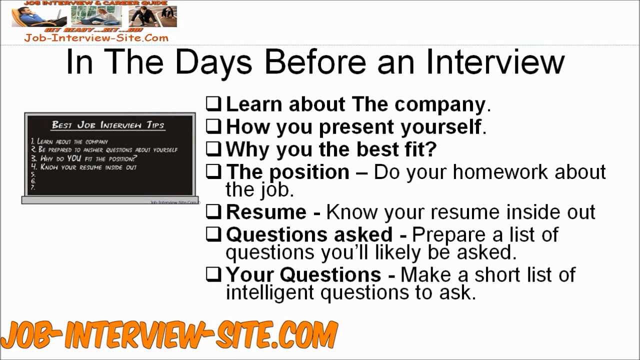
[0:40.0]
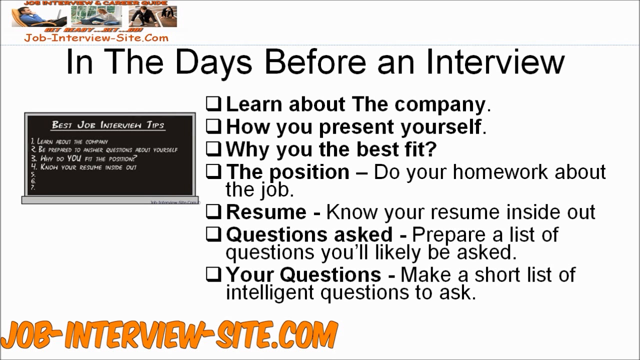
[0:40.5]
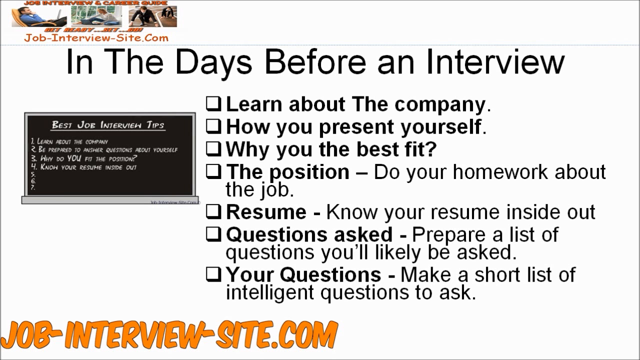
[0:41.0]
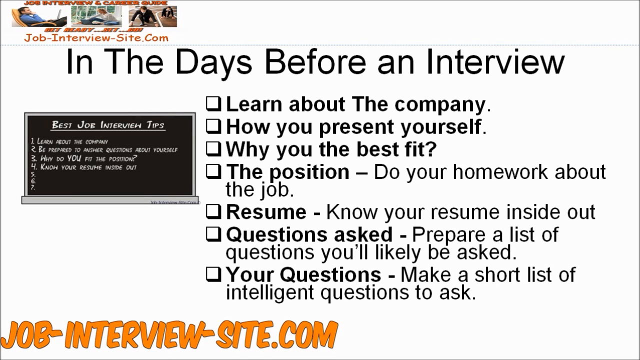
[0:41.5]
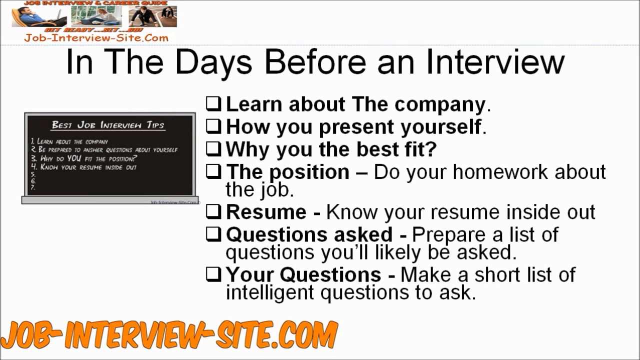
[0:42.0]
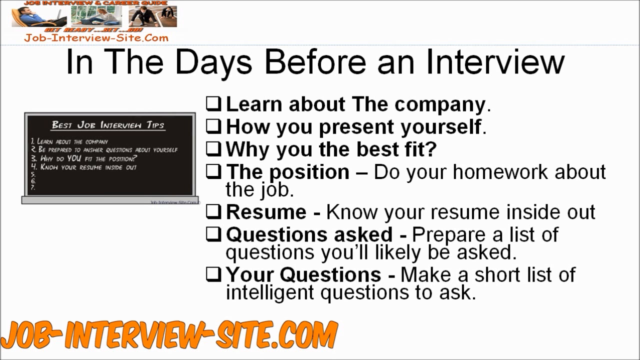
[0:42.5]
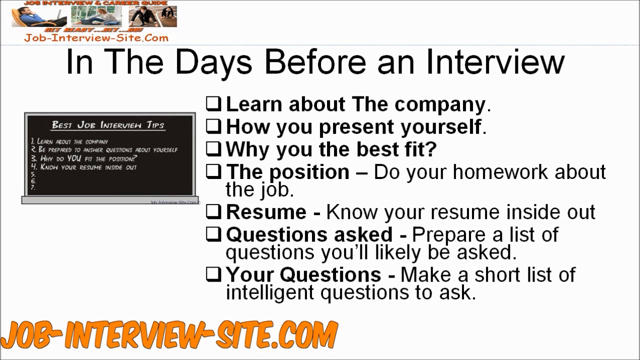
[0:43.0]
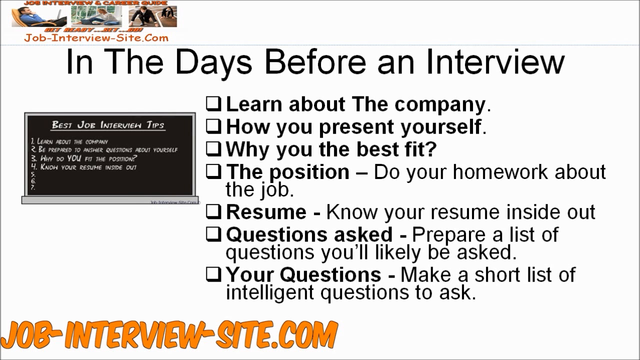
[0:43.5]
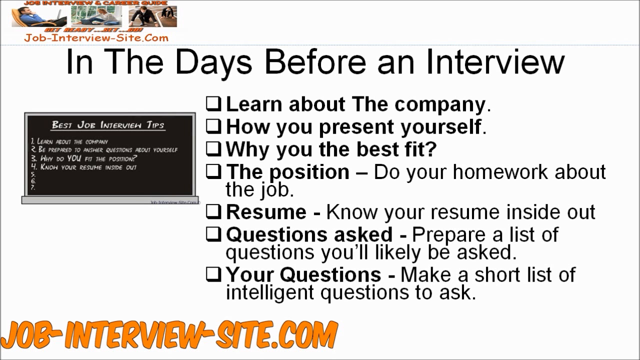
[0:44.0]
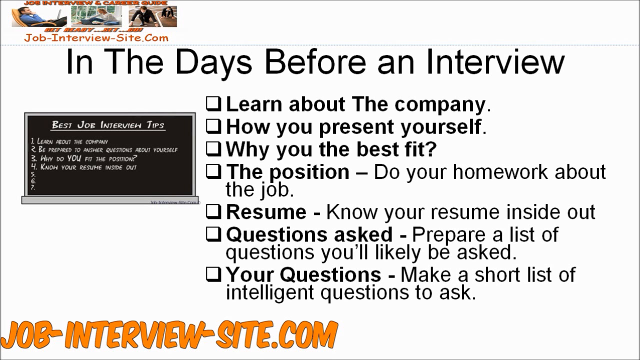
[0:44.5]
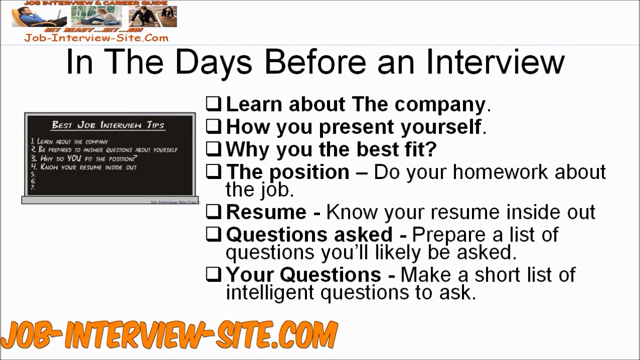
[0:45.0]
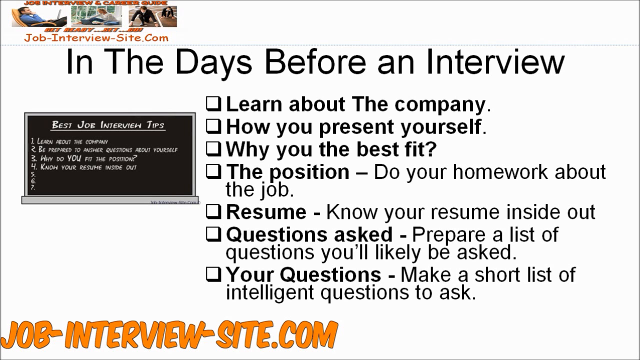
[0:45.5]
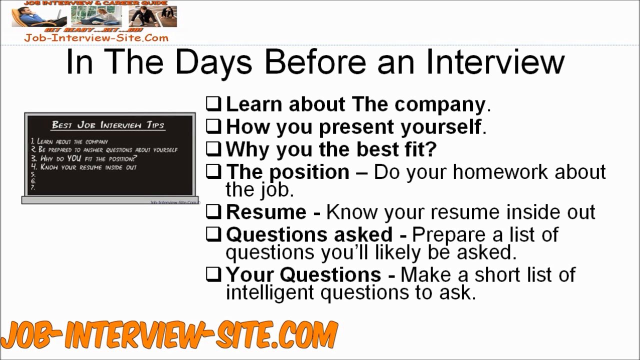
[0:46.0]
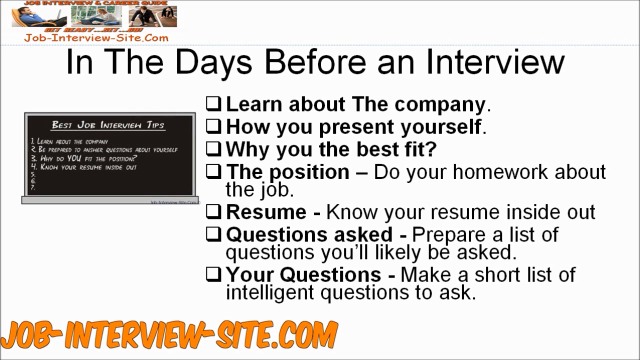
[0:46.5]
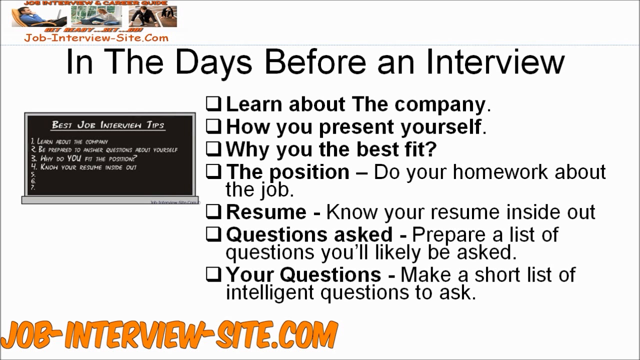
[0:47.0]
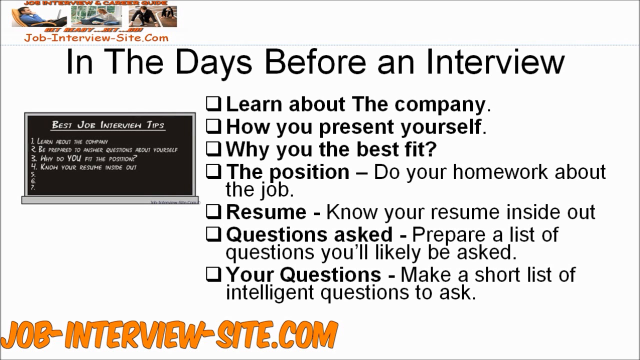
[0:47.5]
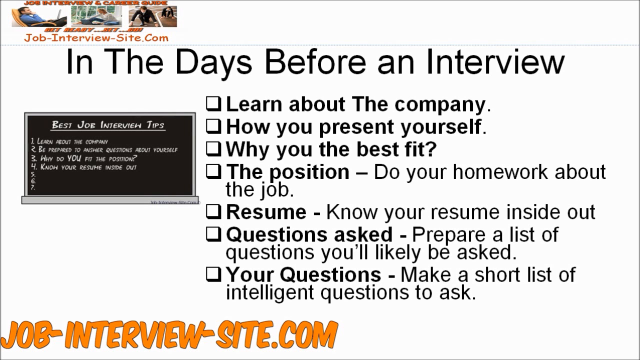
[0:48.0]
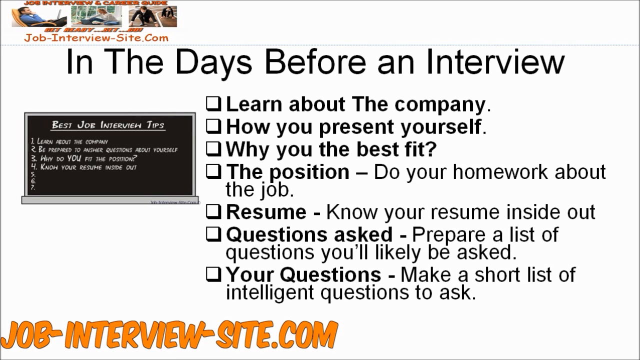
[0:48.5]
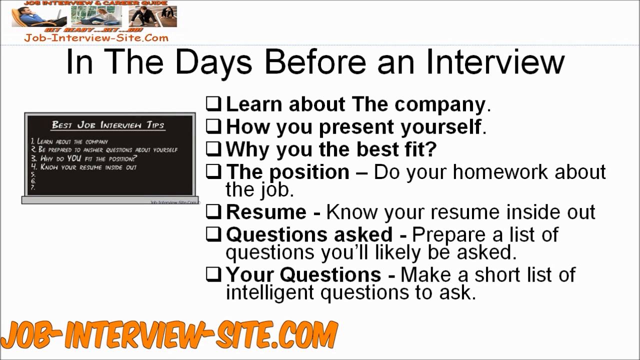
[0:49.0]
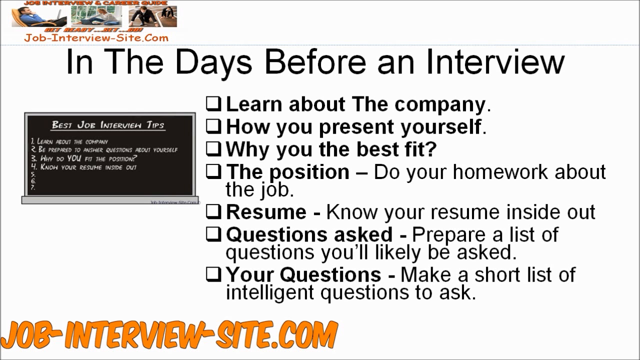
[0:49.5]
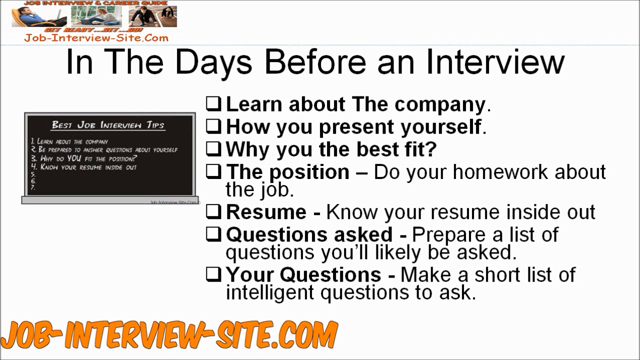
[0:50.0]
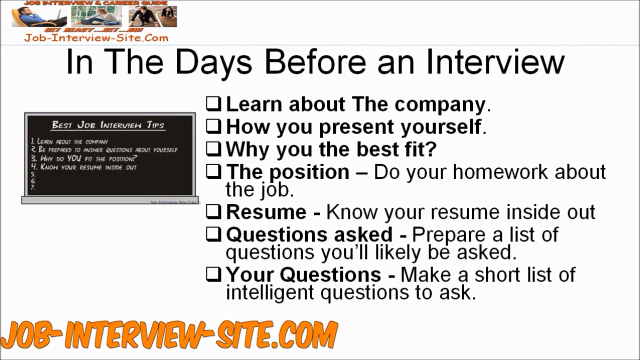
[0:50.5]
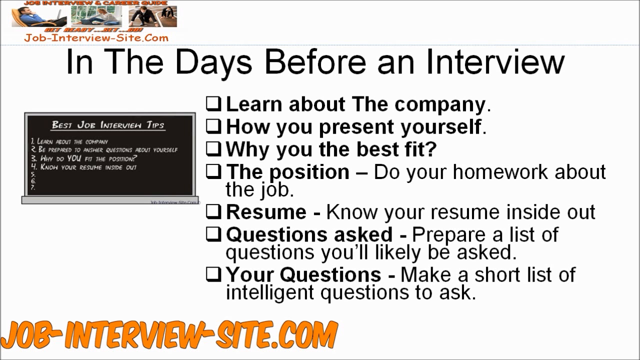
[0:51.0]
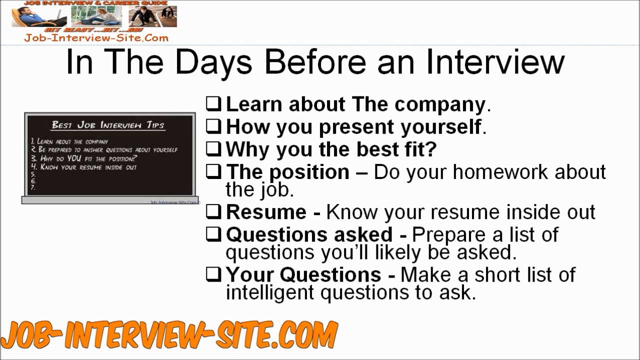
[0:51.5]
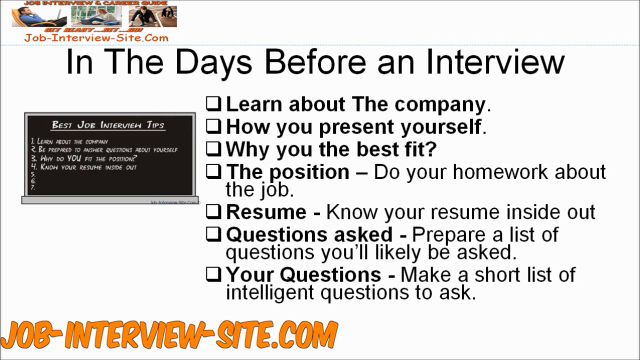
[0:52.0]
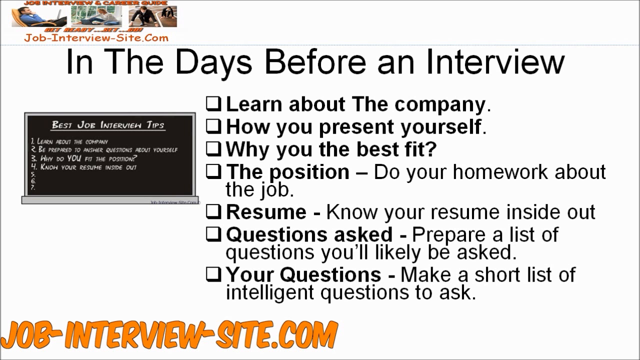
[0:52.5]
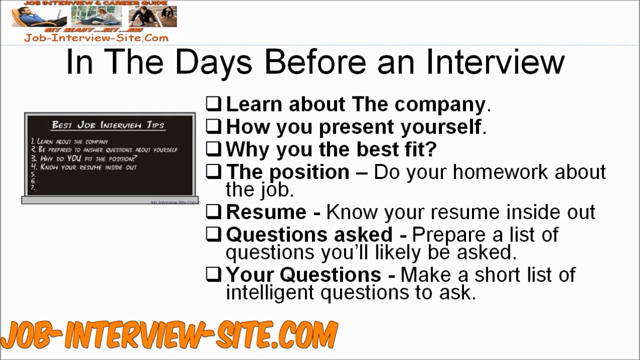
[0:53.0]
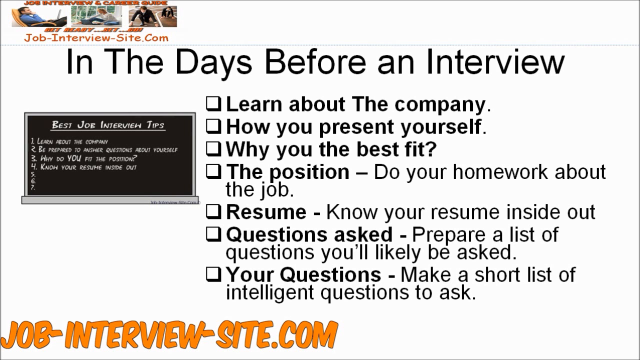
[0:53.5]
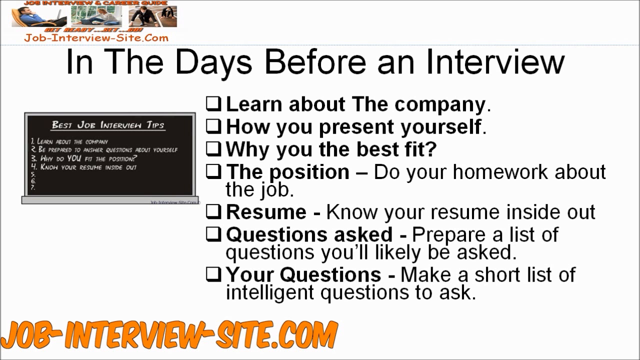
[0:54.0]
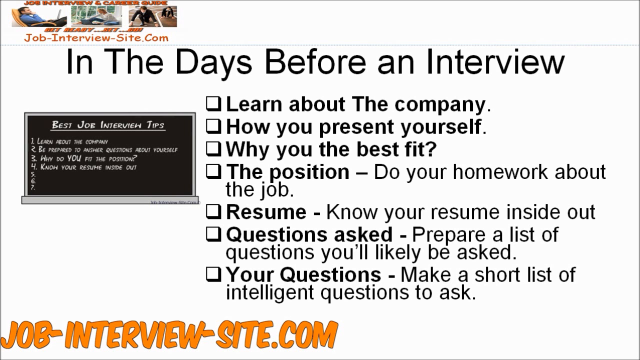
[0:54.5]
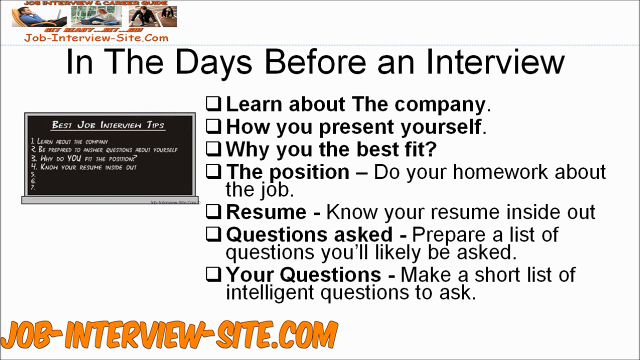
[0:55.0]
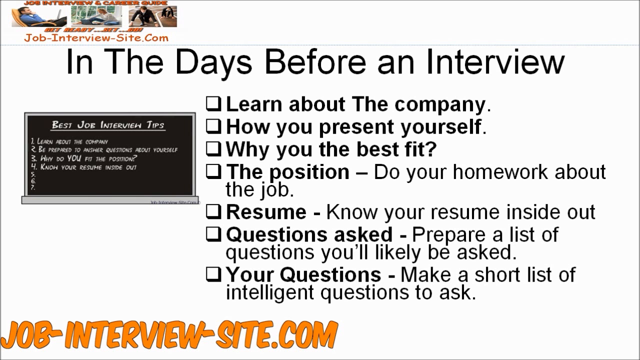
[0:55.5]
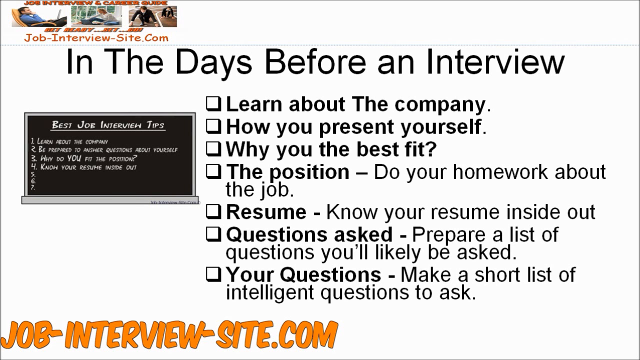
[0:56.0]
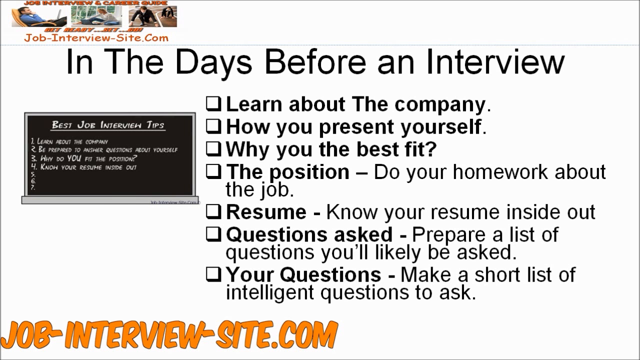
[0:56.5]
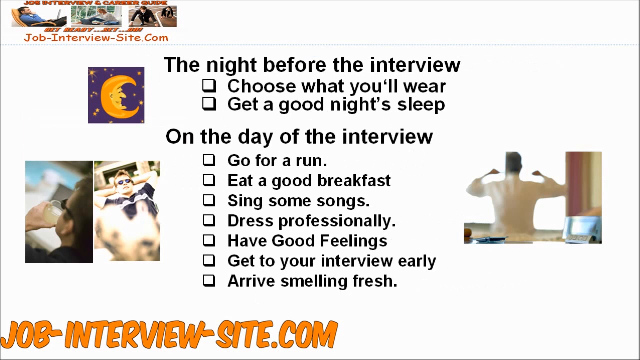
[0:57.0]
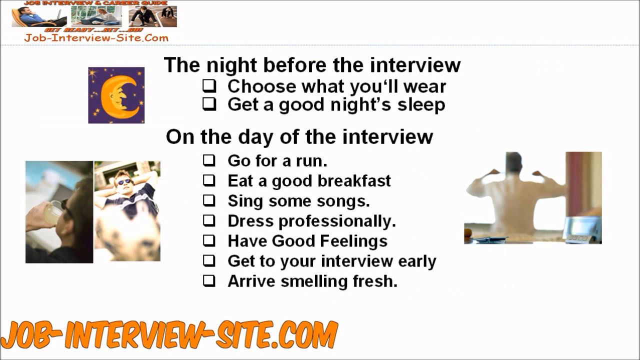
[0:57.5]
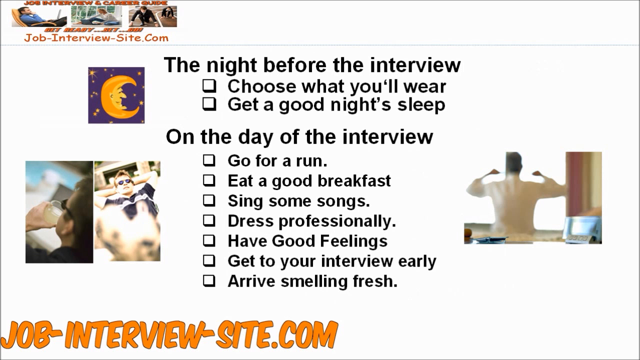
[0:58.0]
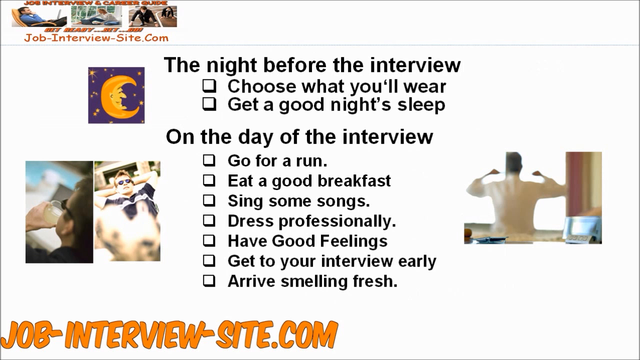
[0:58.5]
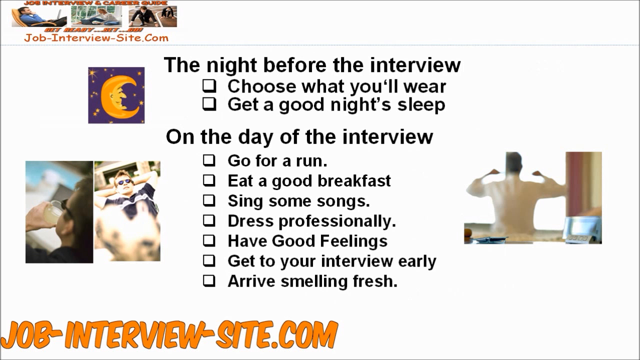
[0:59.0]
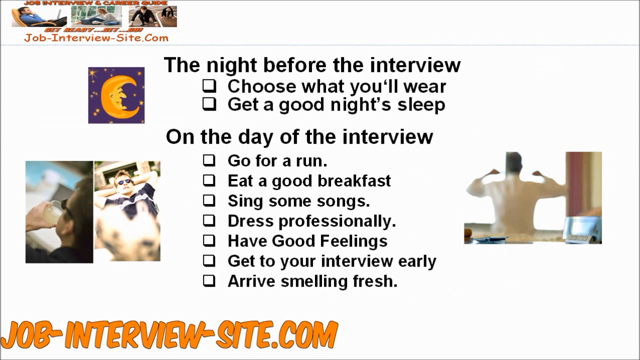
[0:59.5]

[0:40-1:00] The same page stays on screen. The seven headings, "learn about the company," "how you present yourself," "why are you the best fit," "the position," "resume," "questions asked," and "your questions," are in a bold font. Several are followed by additional information in a standard, non-bold font; for example, "resume" is in bold and the following "know your resume inside out" is not. At the bottom of the screen, "jobinterviewsite.com" appears in an orange font. In the final second or two, more information appears about the night before the interview and the day of the interview.